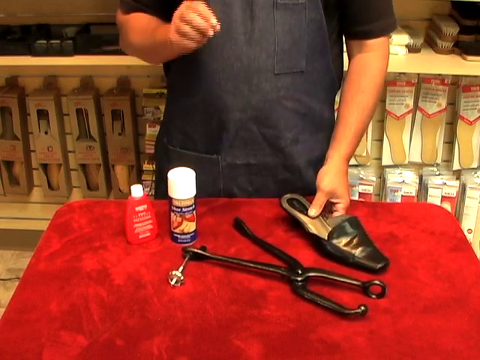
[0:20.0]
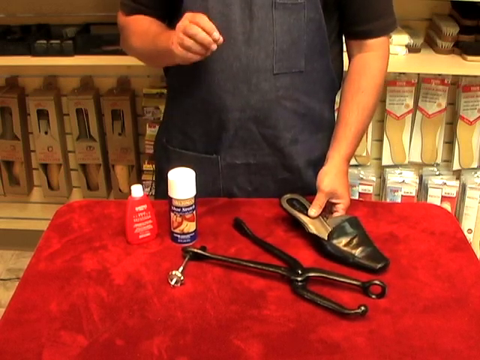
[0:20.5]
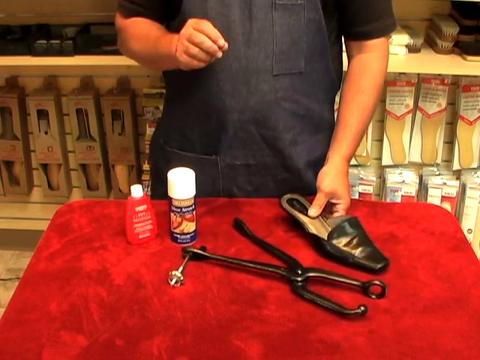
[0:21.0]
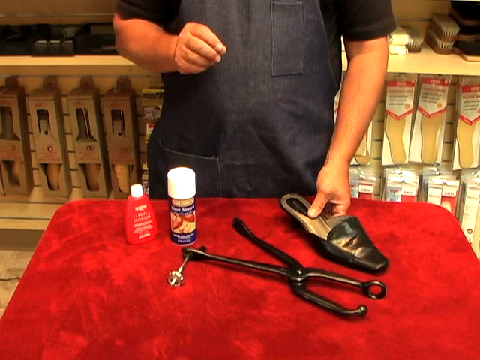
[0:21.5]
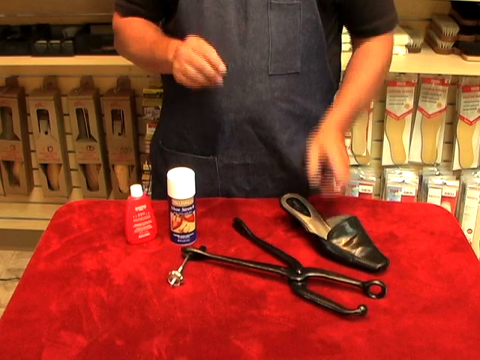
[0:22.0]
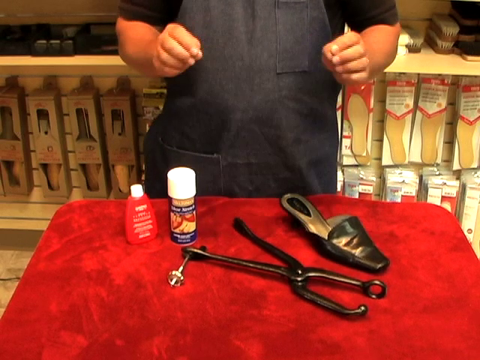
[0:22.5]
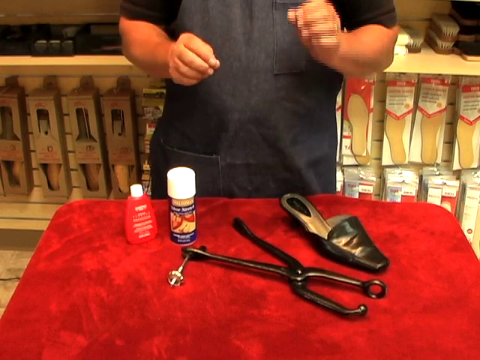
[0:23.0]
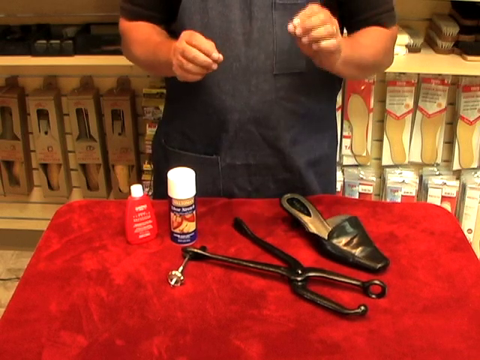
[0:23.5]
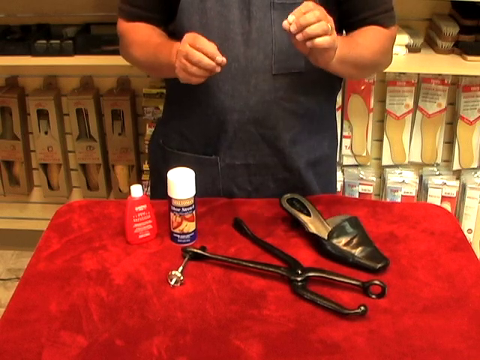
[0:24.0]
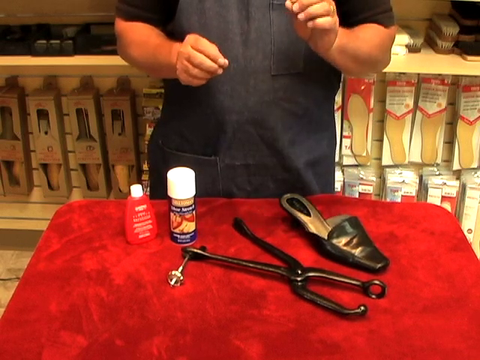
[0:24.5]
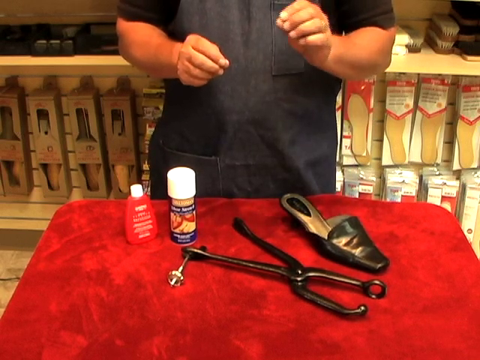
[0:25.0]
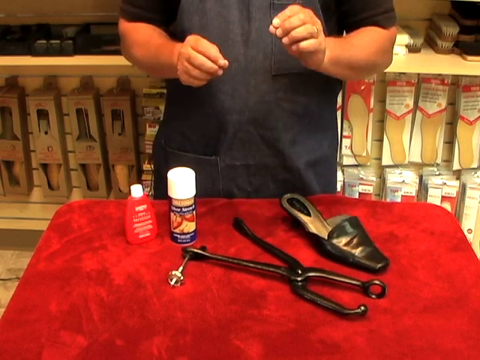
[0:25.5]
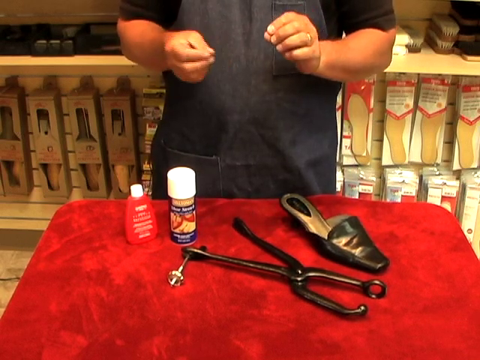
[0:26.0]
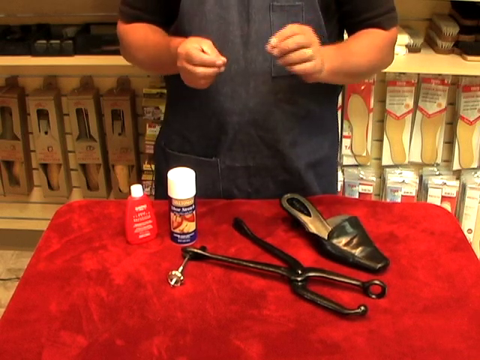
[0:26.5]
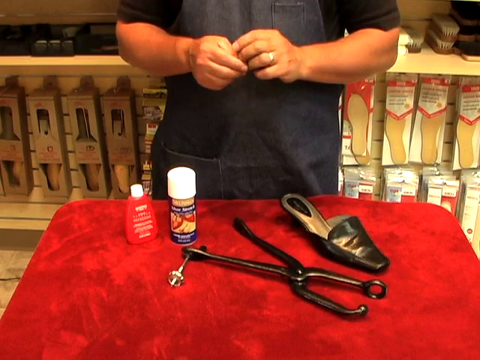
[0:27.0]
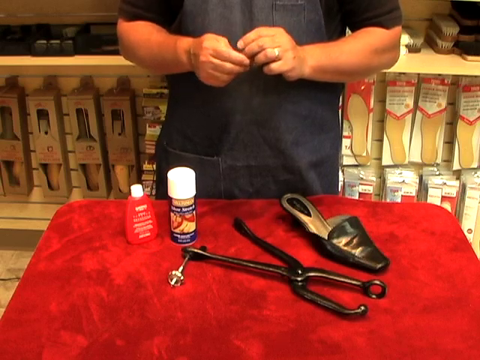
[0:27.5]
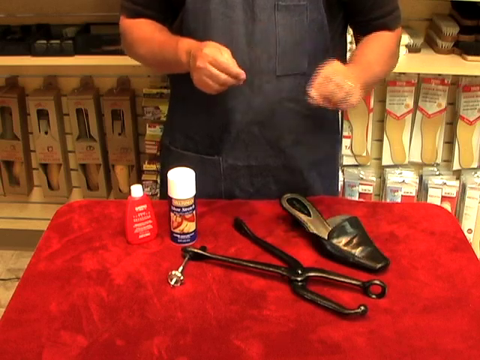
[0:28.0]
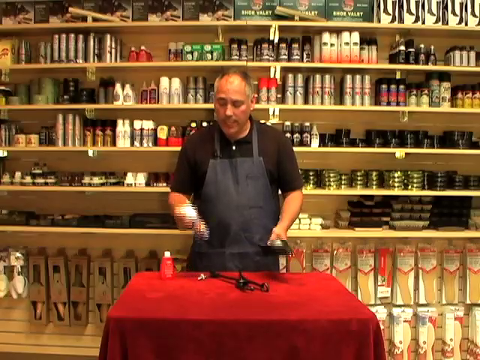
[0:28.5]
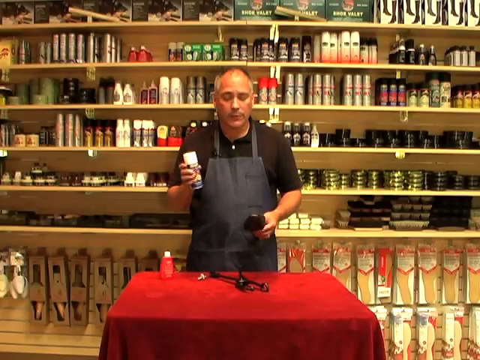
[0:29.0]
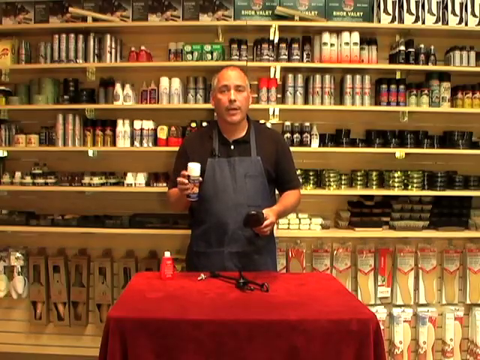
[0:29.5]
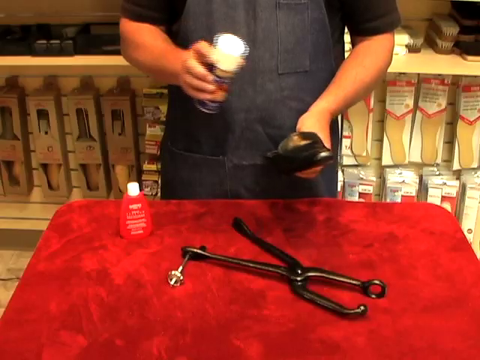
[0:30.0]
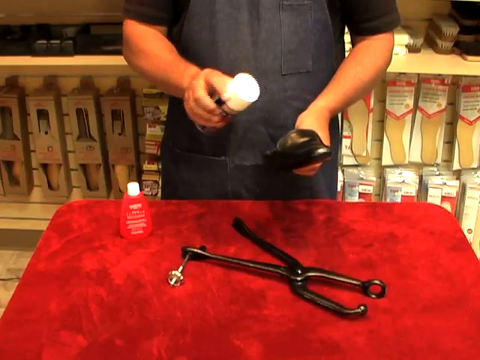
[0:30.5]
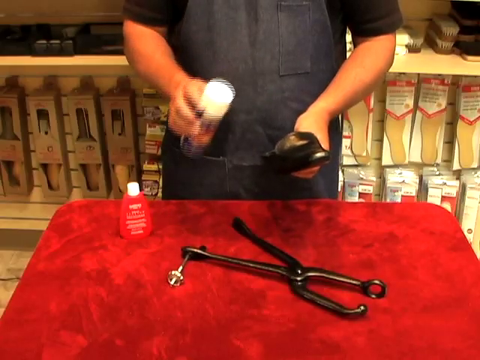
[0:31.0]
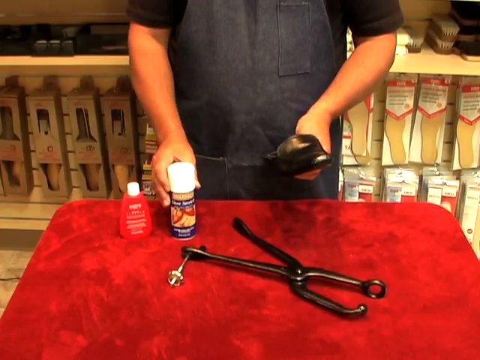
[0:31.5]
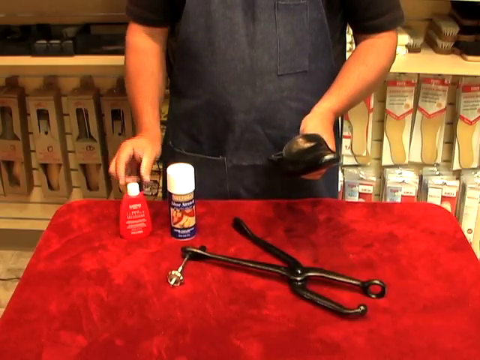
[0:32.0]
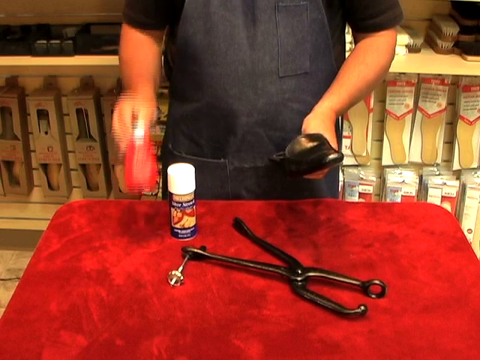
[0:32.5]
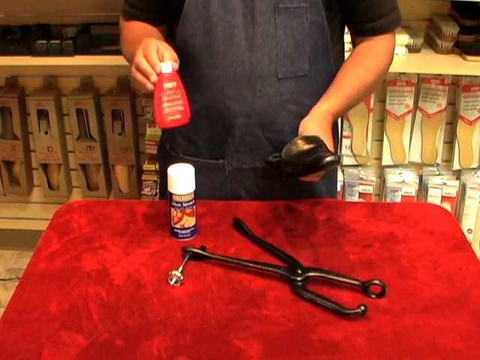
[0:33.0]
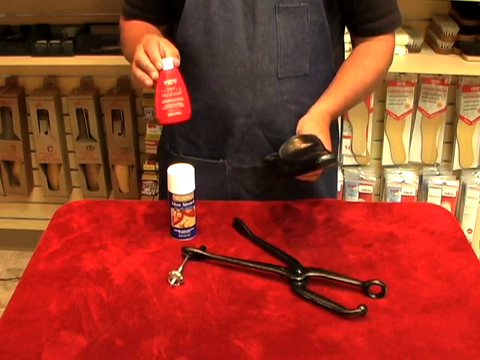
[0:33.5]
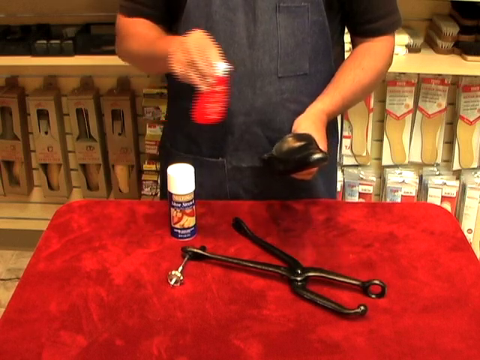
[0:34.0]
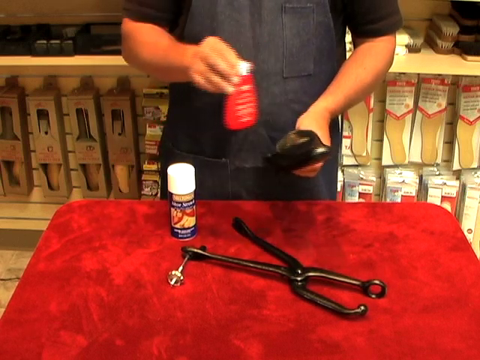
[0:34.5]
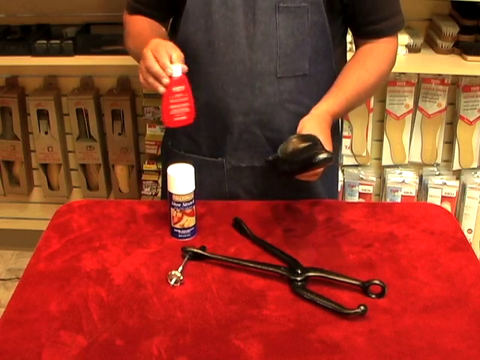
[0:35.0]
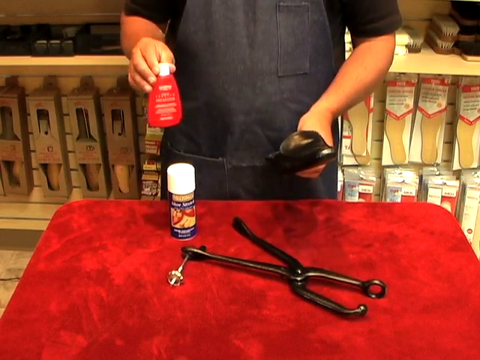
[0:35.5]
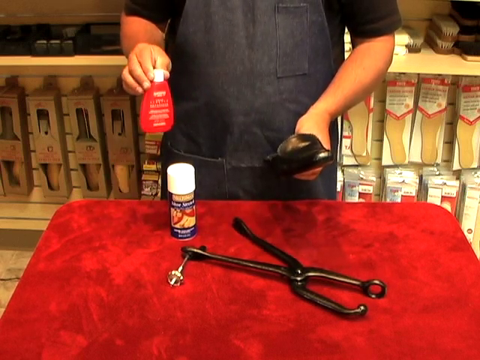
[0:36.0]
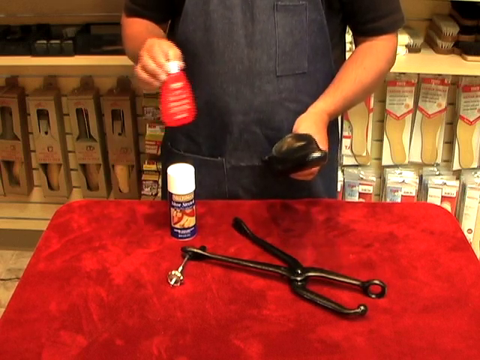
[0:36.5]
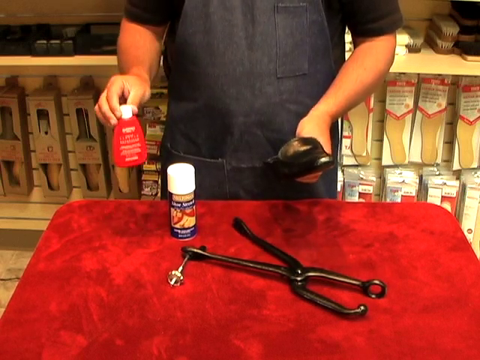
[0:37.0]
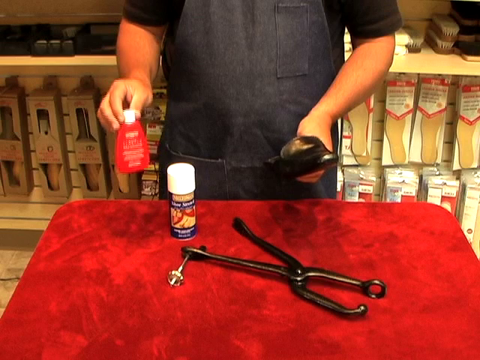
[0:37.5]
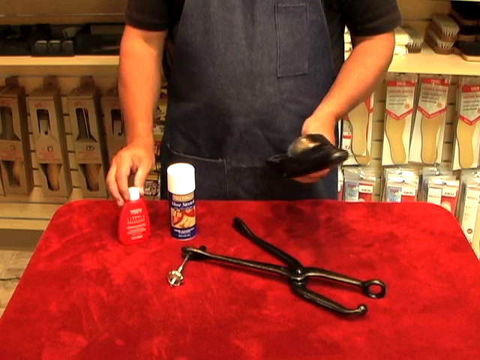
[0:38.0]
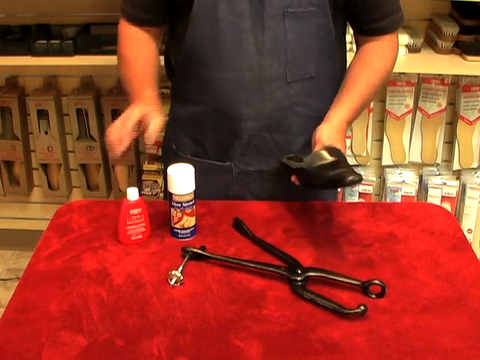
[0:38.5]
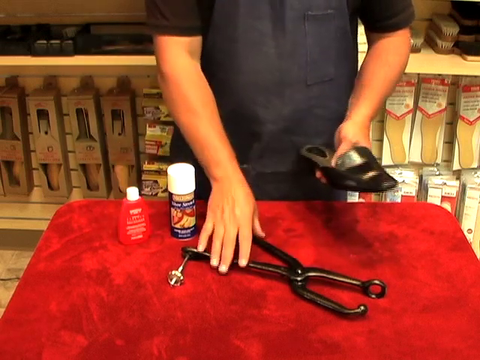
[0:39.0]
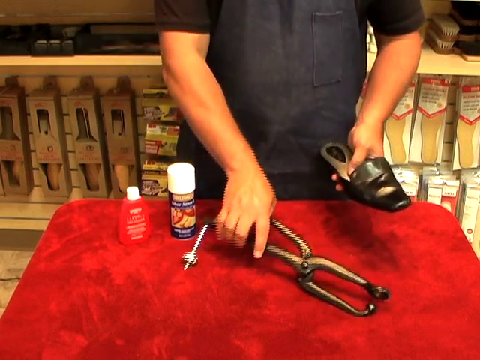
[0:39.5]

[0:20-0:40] A white man with hairy hands wears a black apron and a black T-shirt. The apron has two pockets, one at the lower end and one at the upper end. He holds a black shoe with a unique shape; in the middle of the shoe is a white ribbon, with another black spot at its middle. At the corner is a packet with a white top, and another packet that is red with white writing and a white top. All these things rest on a red table. In the background, many items are wrapped in different boxes, about 100 boxes. The man is explaining something, moving his hands in gestures.